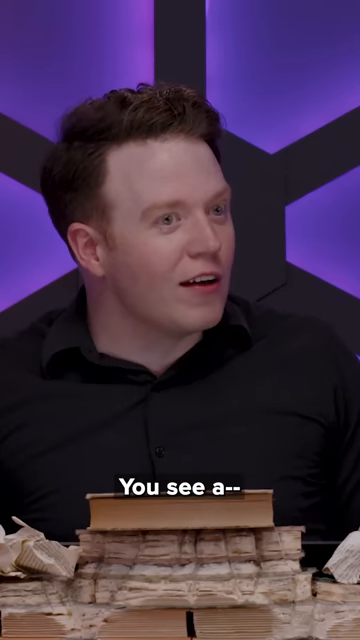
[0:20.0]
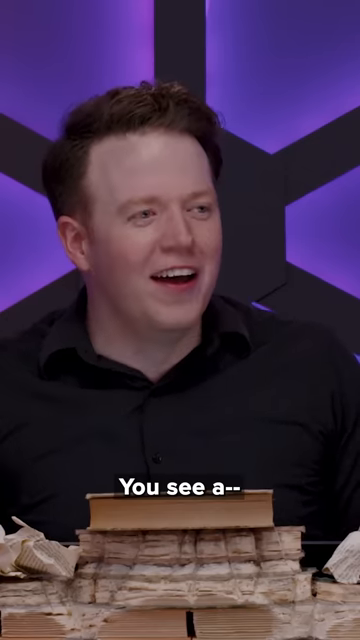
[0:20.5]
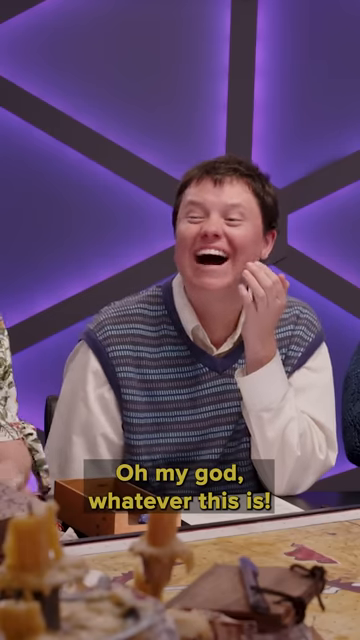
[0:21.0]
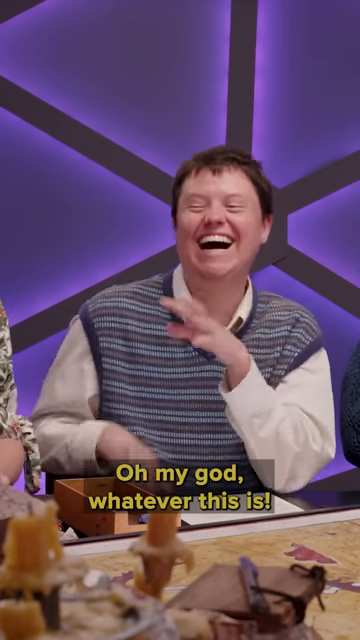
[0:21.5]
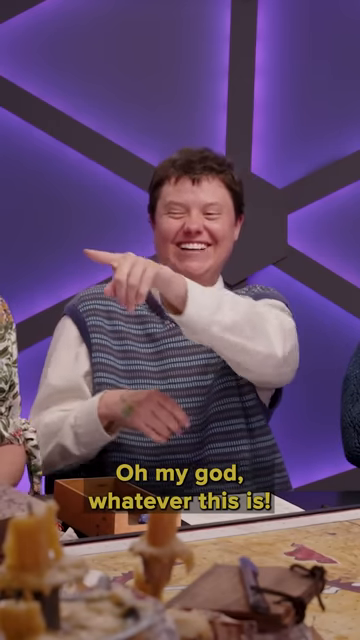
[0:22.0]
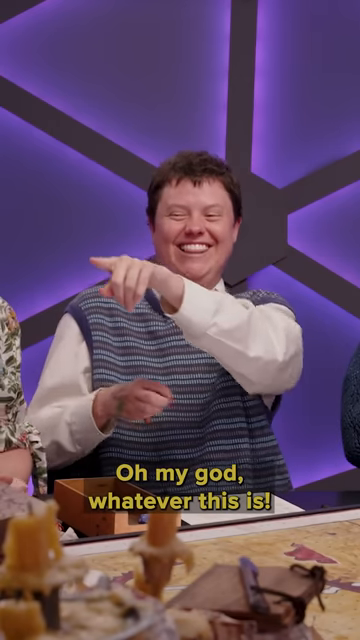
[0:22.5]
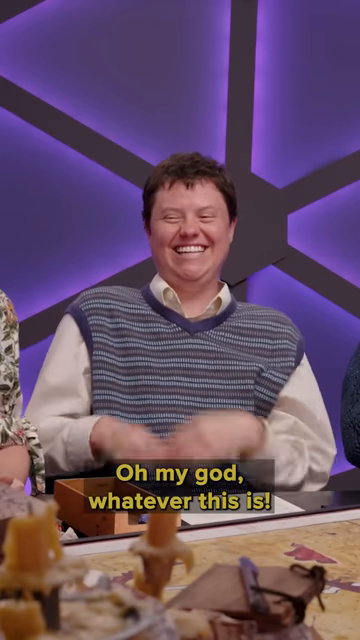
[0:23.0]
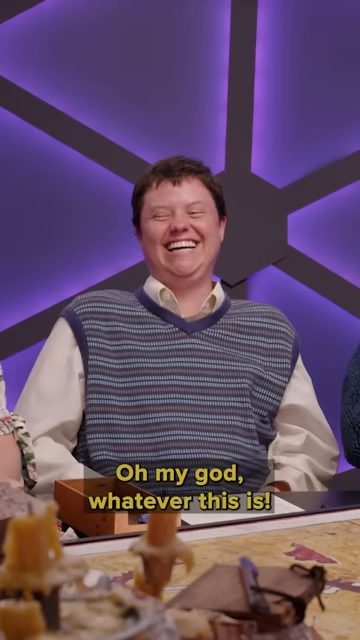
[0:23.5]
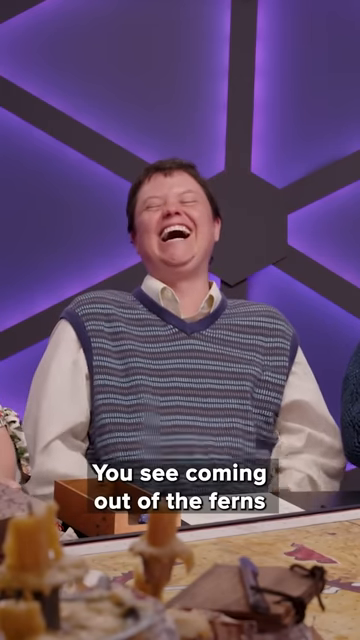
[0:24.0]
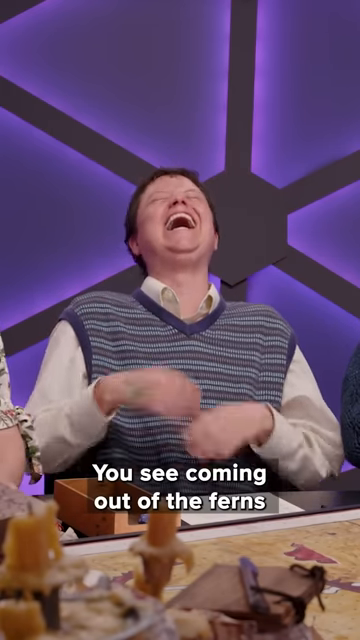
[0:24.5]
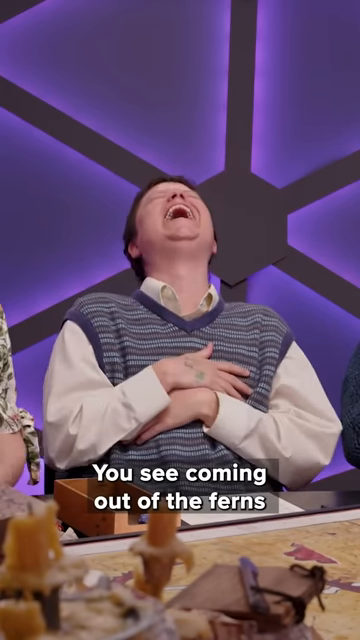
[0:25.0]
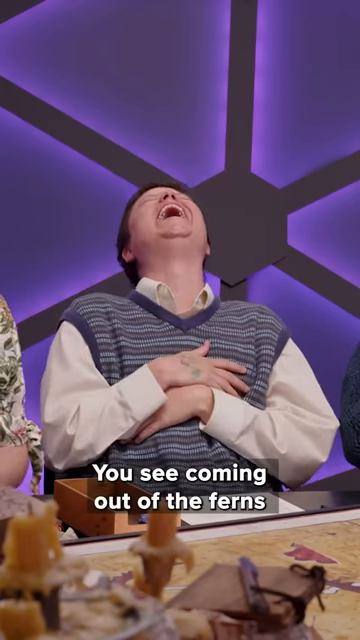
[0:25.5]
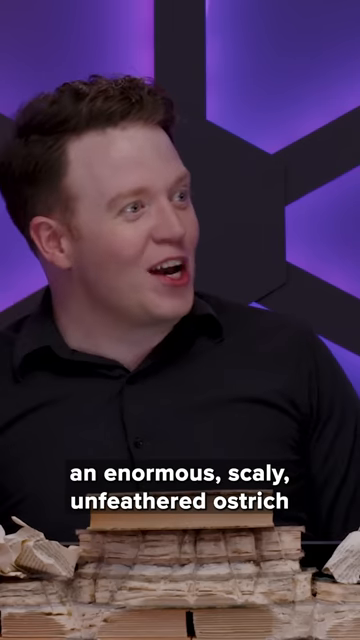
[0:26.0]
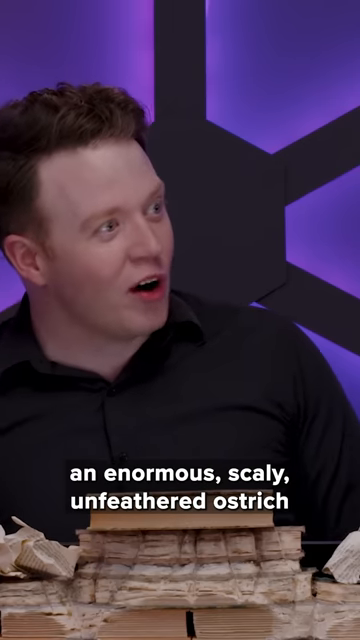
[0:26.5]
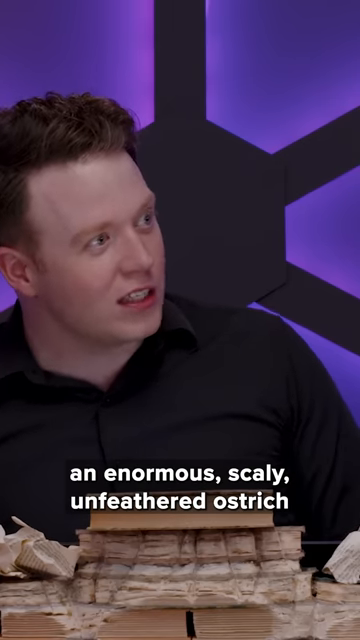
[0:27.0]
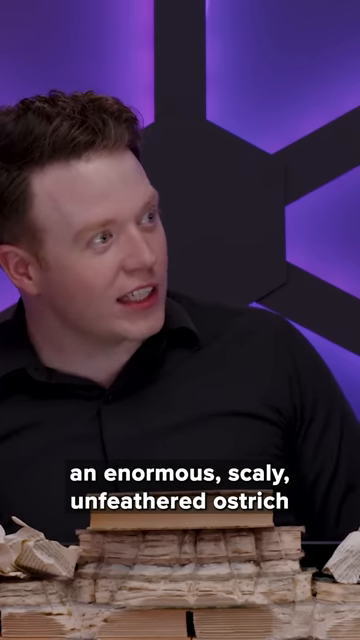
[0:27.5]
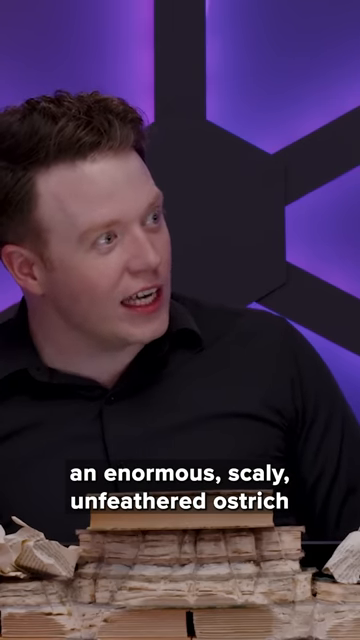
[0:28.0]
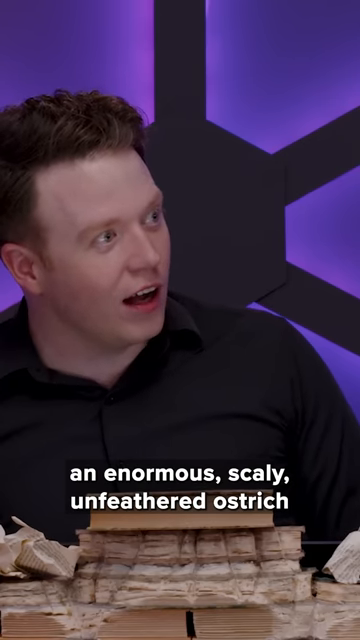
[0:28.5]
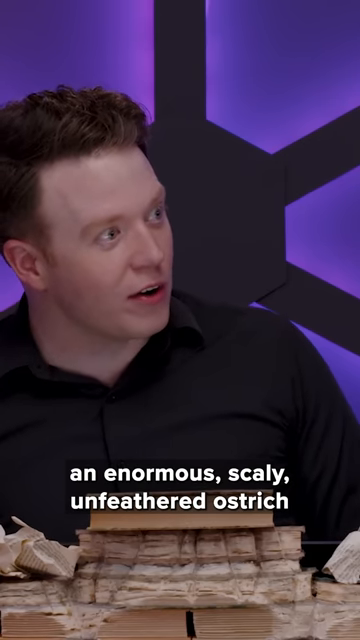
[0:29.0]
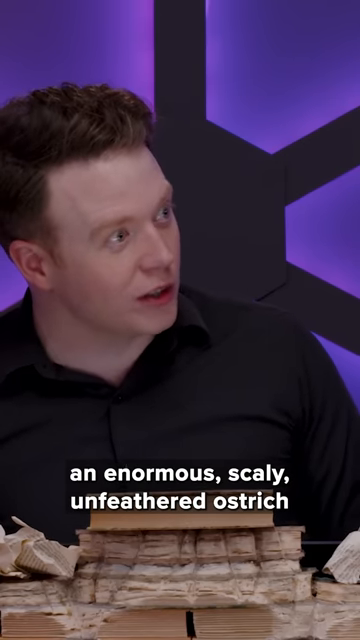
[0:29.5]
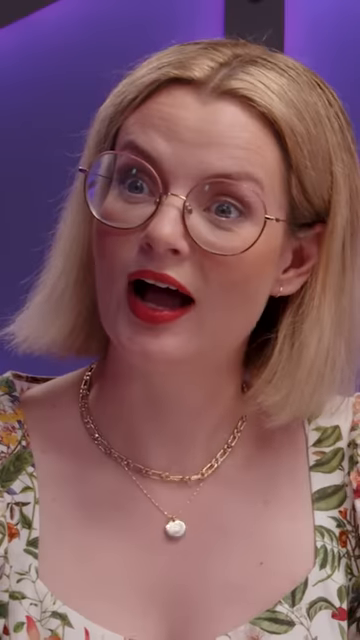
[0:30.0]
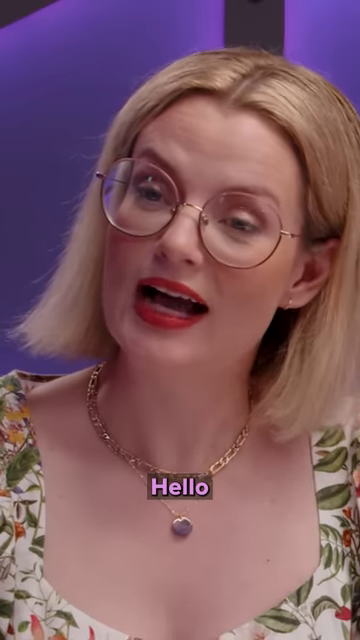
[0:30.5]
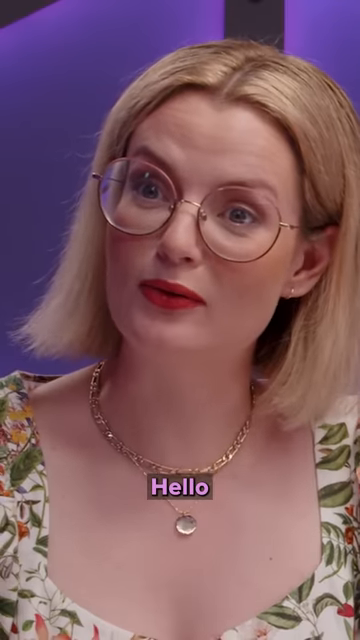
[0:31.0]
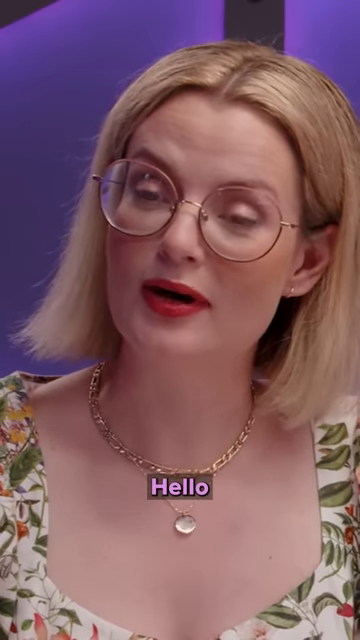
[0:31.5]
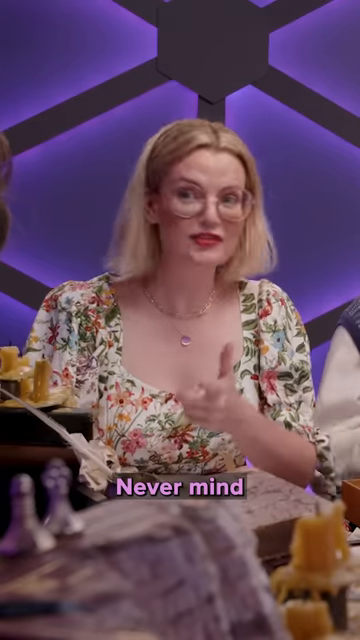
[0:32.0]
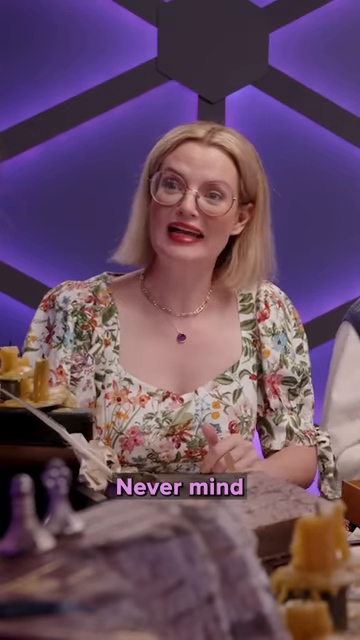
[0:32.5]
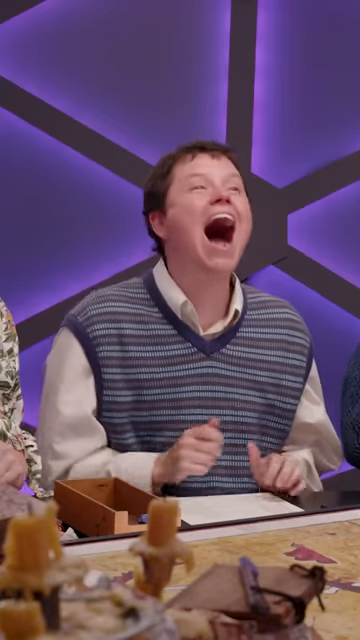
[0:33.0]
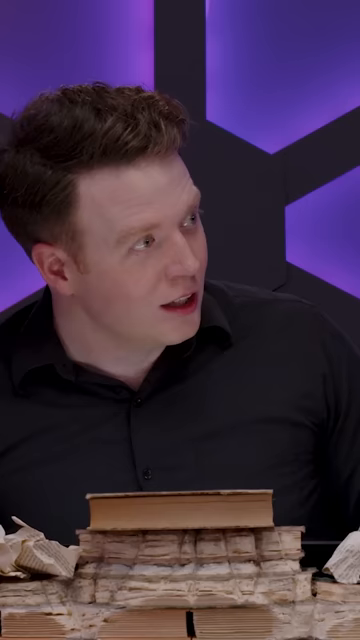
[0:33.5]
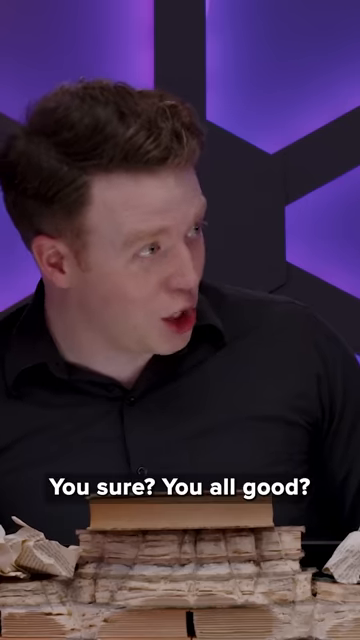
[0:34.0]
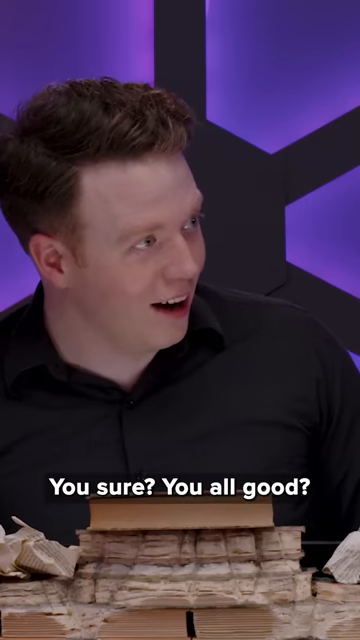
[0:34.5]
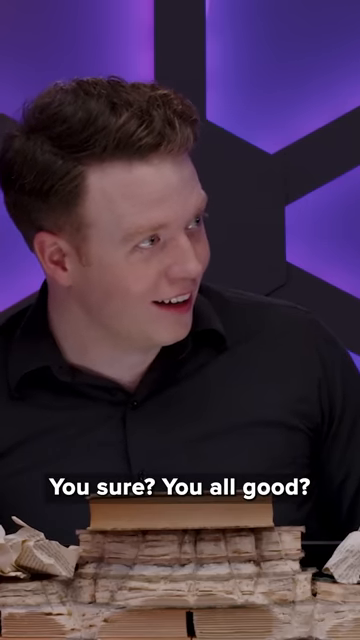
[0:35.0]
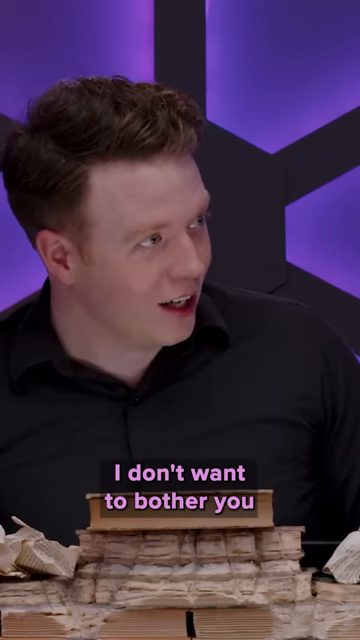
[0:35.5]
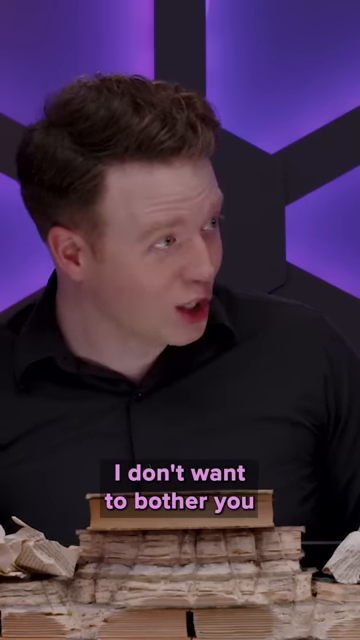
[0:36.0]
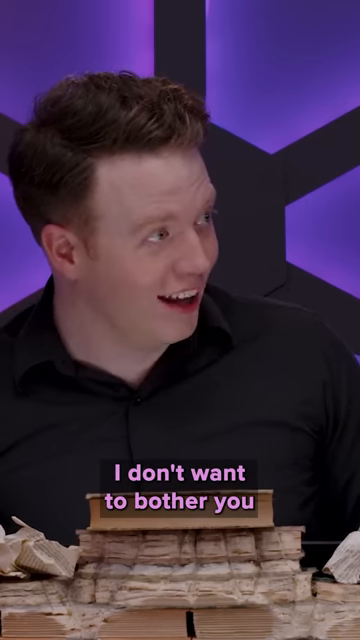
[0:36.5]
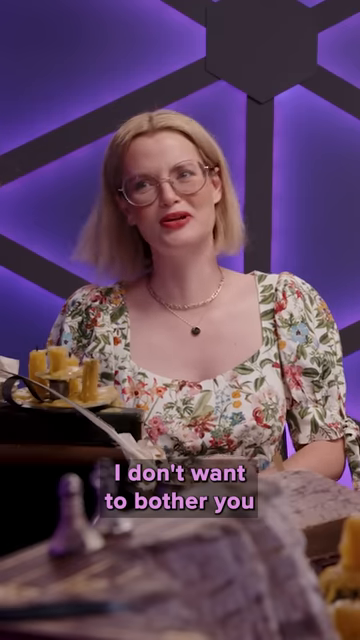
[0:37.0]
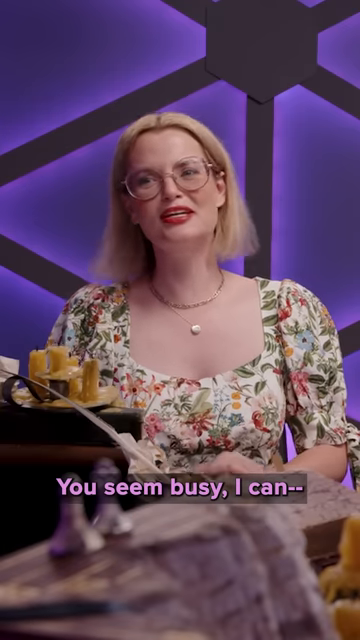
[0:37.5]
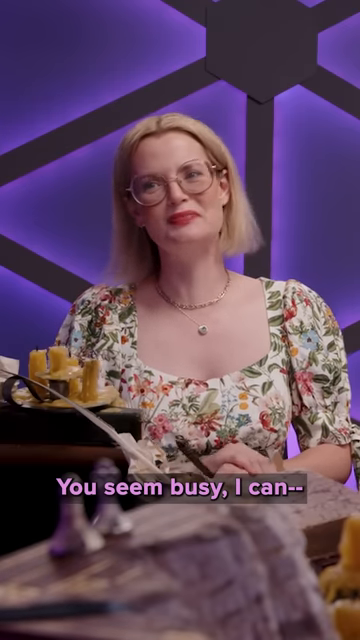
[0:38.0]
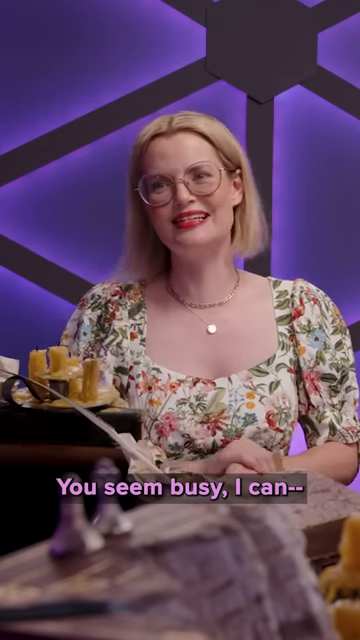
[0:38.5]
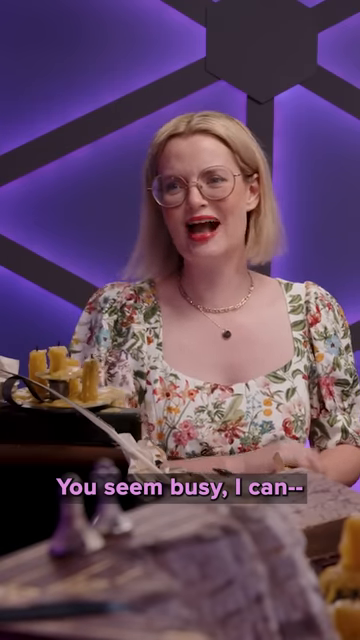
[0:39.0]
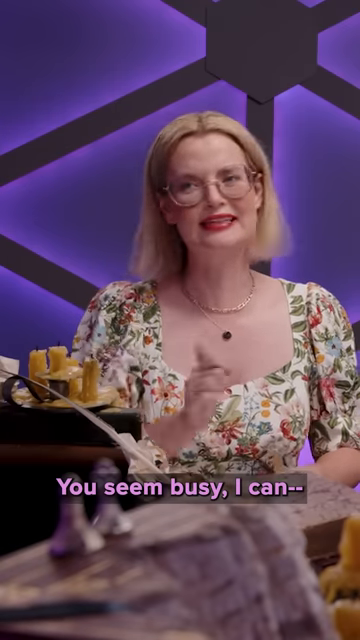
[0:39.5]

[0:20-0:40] A man with short black hair smiles slightly and looks toward the camera. The shot transitions to what looks like a woman with short, kind of spiky hair, wearing a lined straight shirt with very long white sleeves. She puts her hand to her mouth, grinning very widely, as orange text at the bottom reads "oh my god, whatever this is." Still laughing, she raises a finger and points, drops her arms to her sides, tilts her head back as her mouth opens wider, and puts her hands against her chest. White text reads "you see coming out of the ferns an enormous scaly unfeathered ostrich." The man with short brown hair and a black collared shirt looks toward someone and continues talking. The scene changes to a woman with short hair reaching the end of her neck and very large circular glasses; purple text at the bottom reads "hello, nevermind," and she gives a quick thumbs up. Back on the person in the straight lined shirt, they put up their thumbs in approval, mouth wide open, laughing and leaning forward. The man with short brown hair is kind of leaning over as white text reads "you sure? You all good?" He makes a kind of sly facial expression, and purple text reads "I don't want to bother you." The woman with blonde hair reaching the end of her neck and the floral dress says "you seem busy. I can't," which cuts off there; she shakes her head and moves her hands. The scene returns to the man with short brown hair, who talks as white text at the bottom reads "you don't want help."